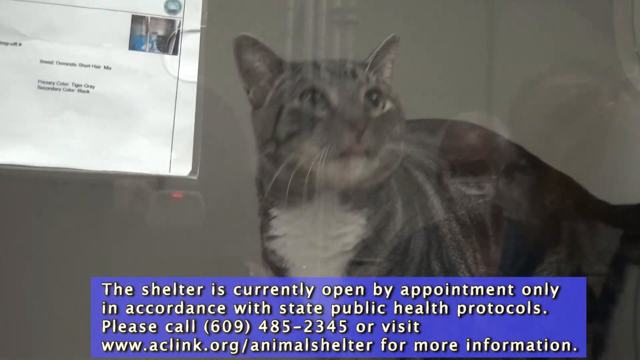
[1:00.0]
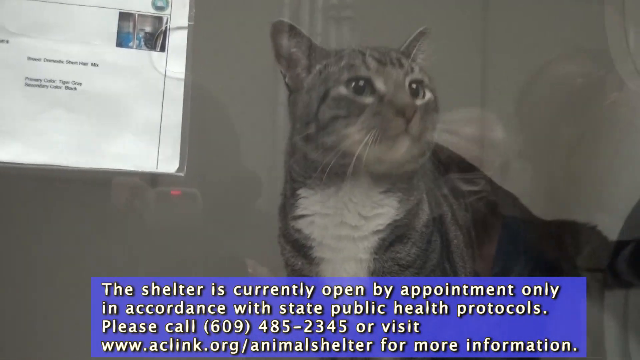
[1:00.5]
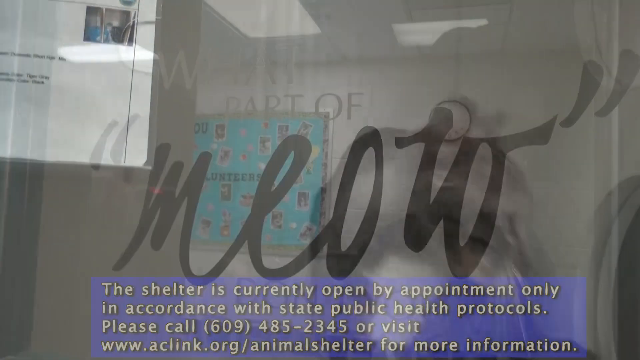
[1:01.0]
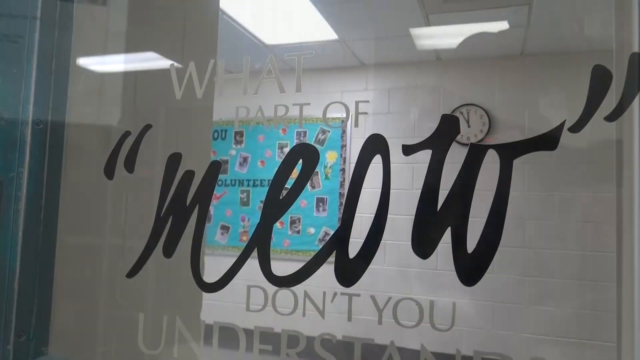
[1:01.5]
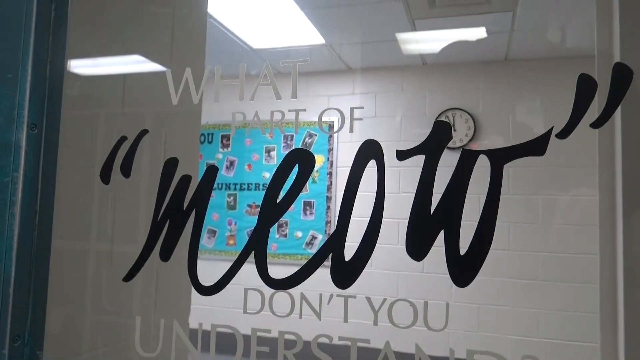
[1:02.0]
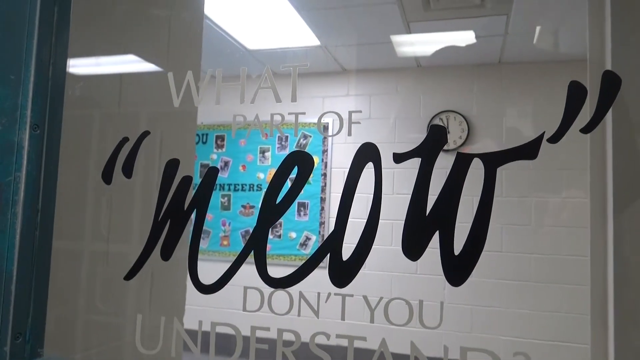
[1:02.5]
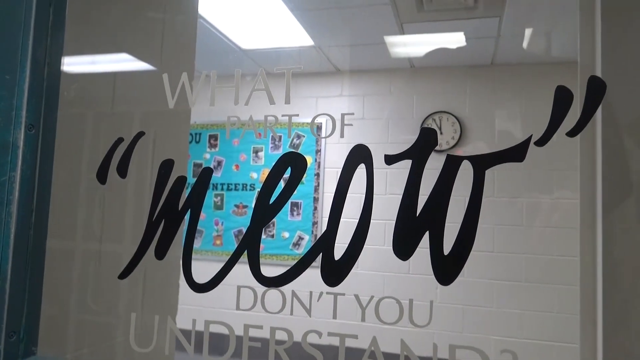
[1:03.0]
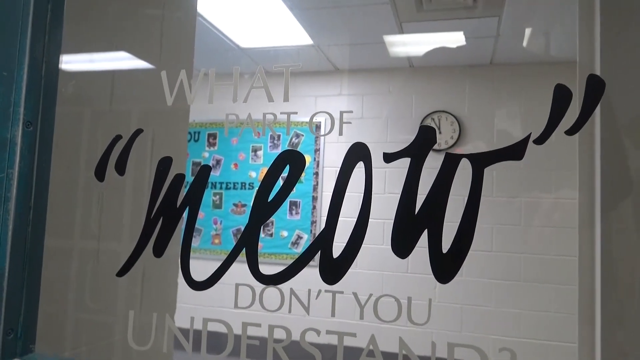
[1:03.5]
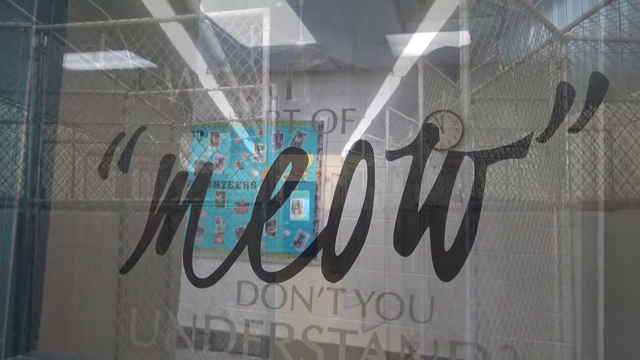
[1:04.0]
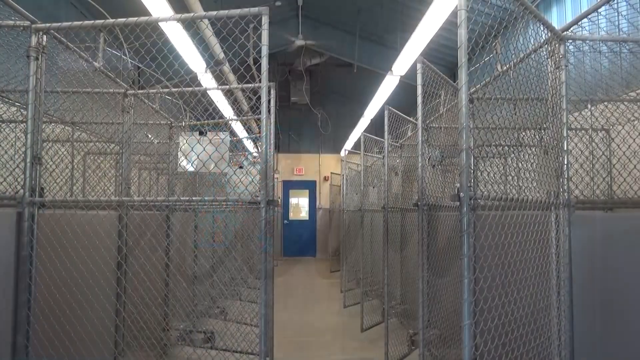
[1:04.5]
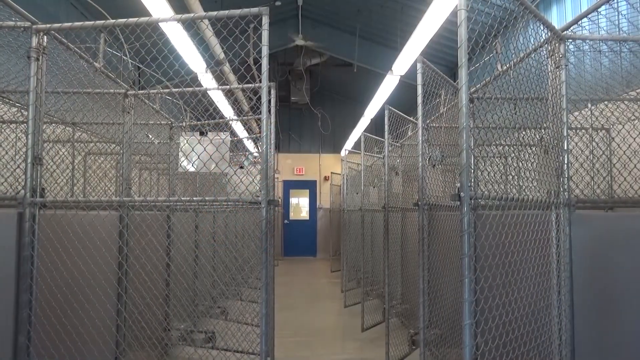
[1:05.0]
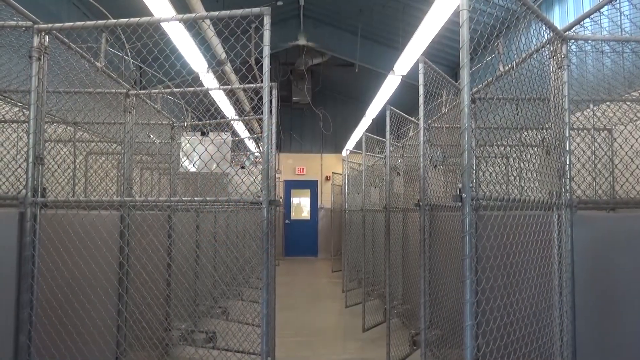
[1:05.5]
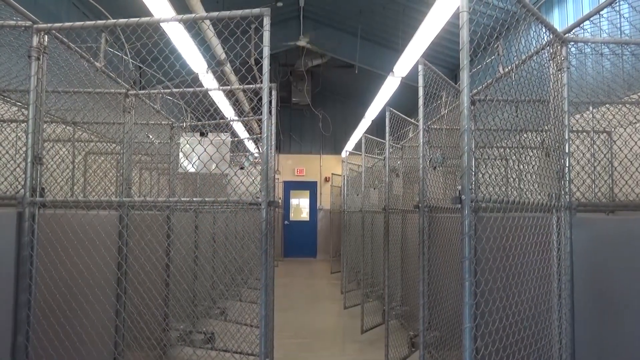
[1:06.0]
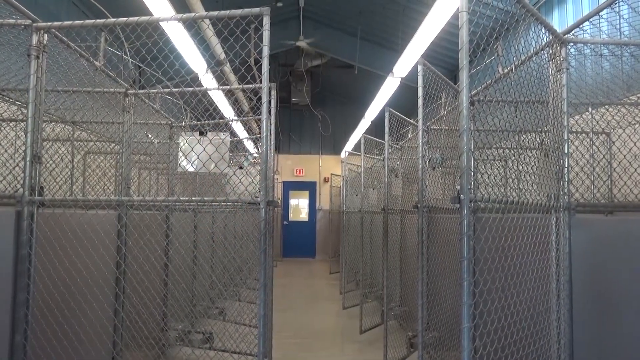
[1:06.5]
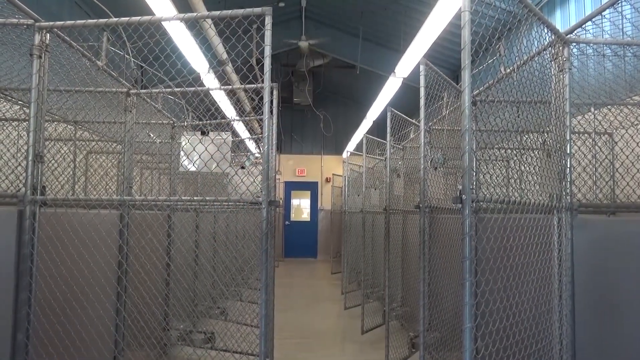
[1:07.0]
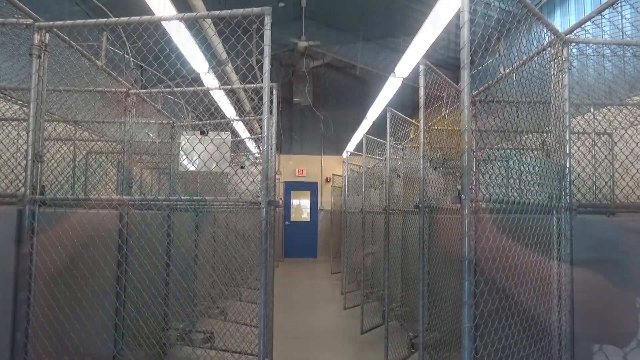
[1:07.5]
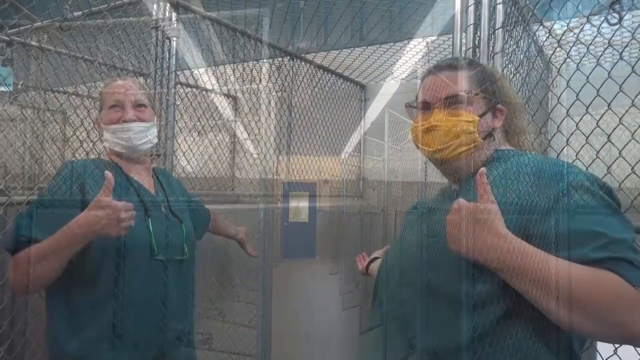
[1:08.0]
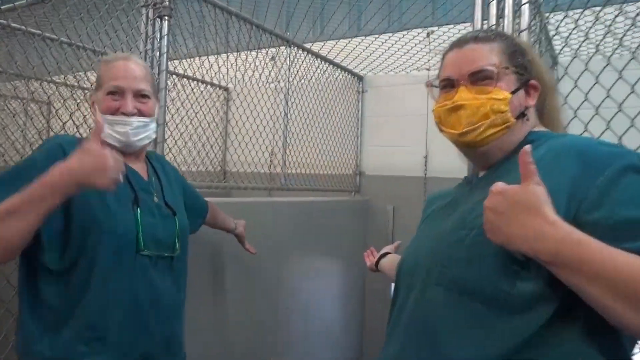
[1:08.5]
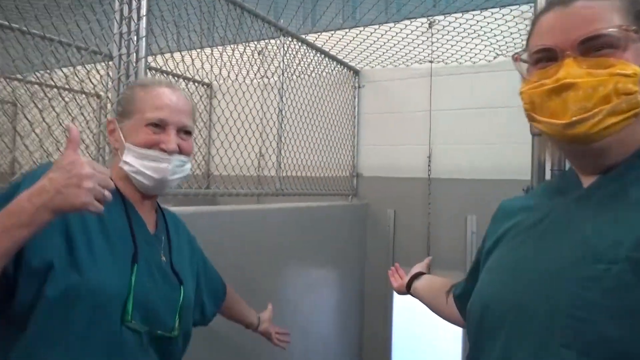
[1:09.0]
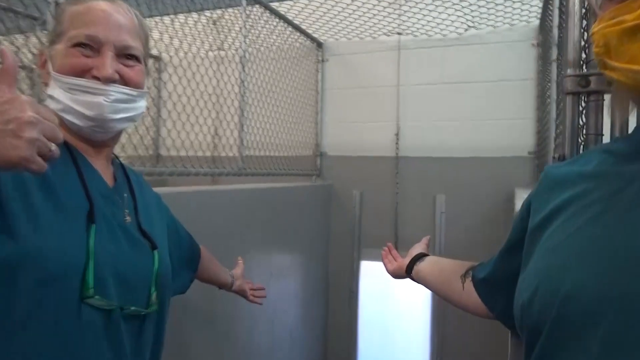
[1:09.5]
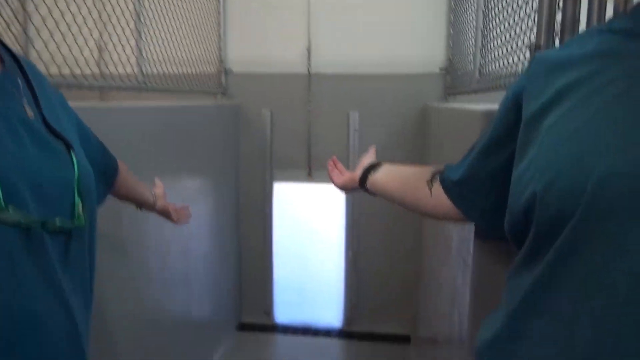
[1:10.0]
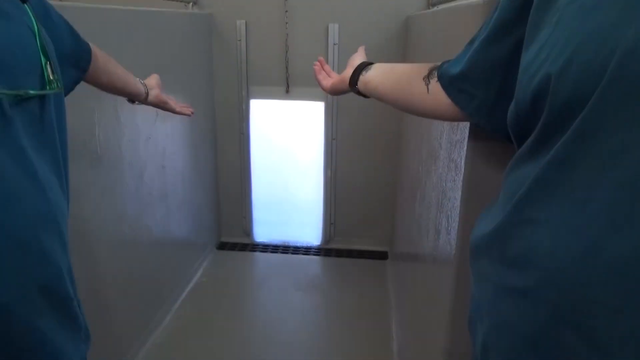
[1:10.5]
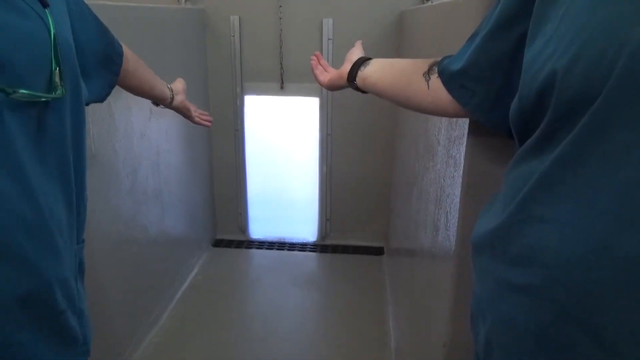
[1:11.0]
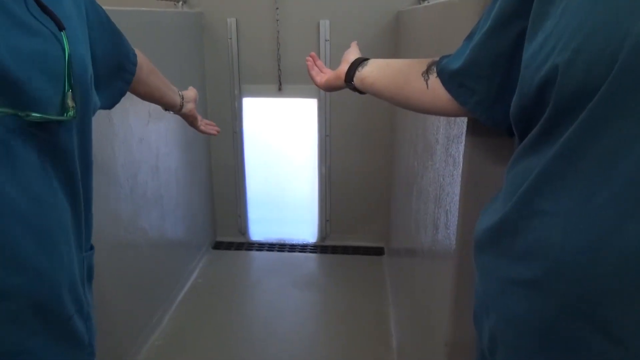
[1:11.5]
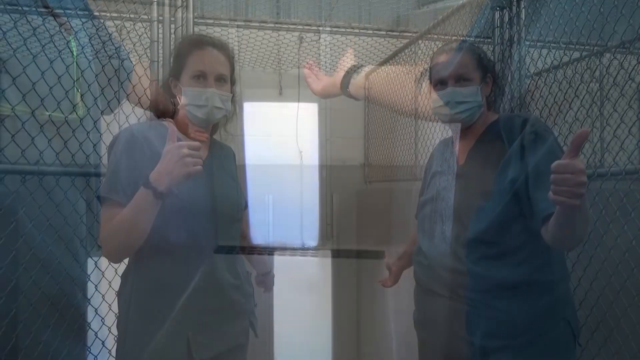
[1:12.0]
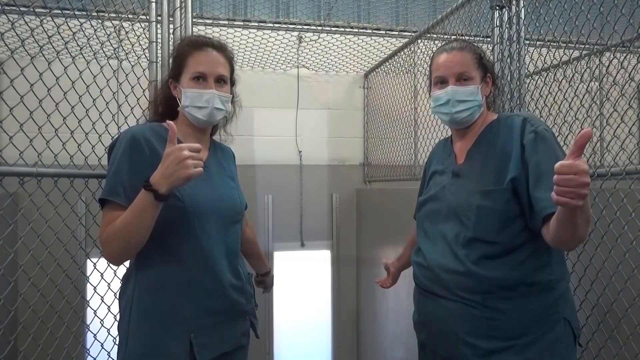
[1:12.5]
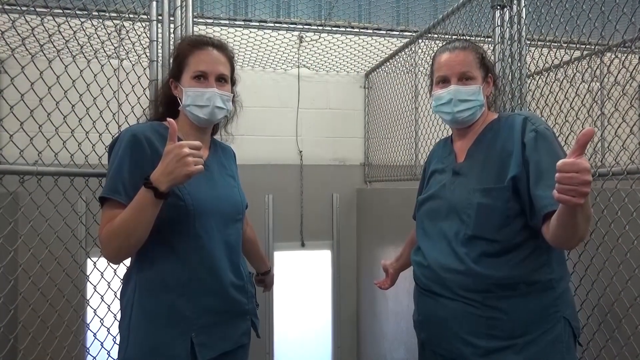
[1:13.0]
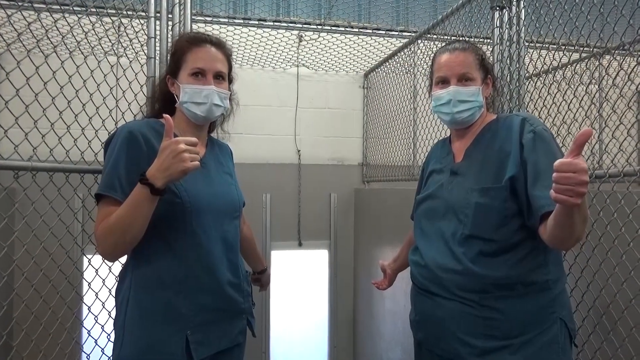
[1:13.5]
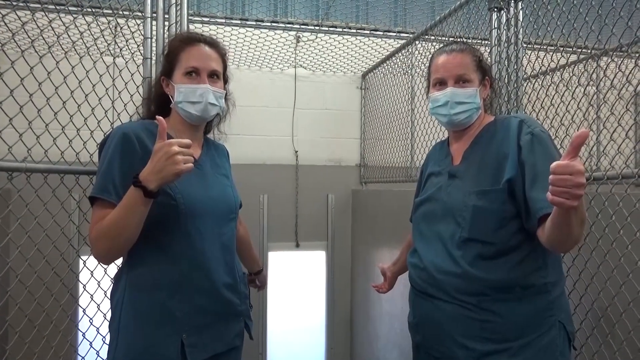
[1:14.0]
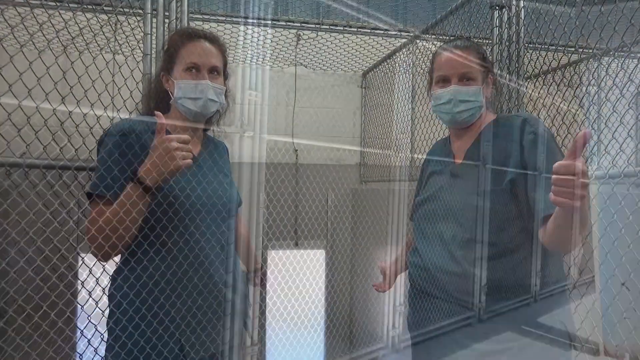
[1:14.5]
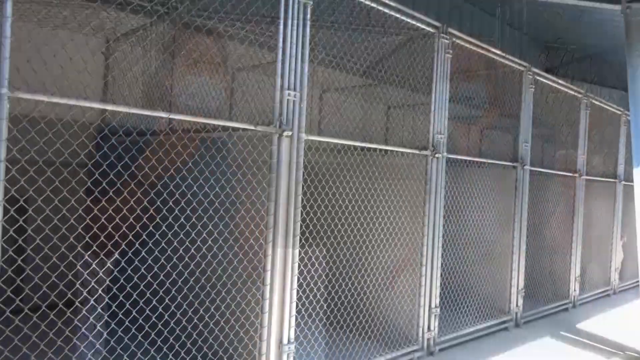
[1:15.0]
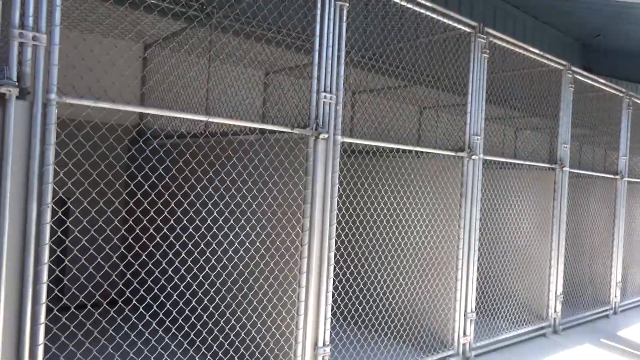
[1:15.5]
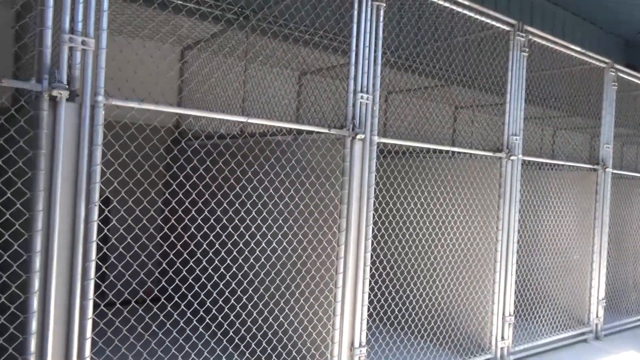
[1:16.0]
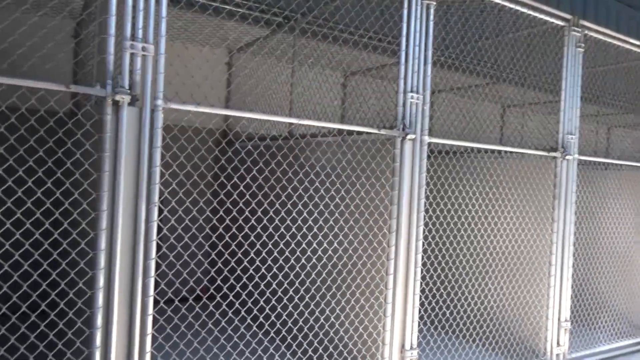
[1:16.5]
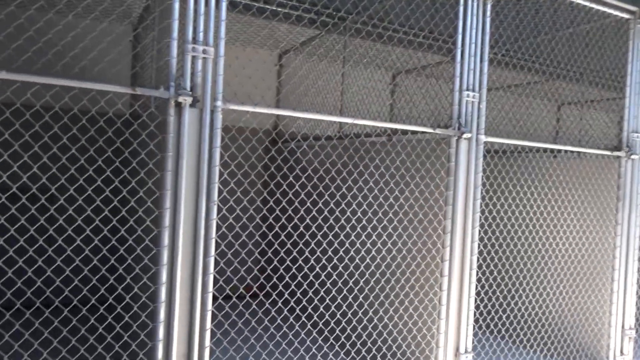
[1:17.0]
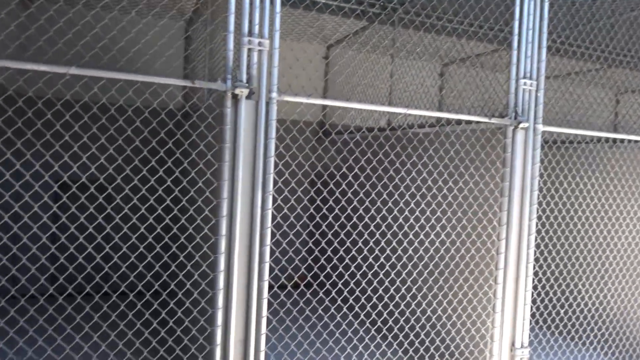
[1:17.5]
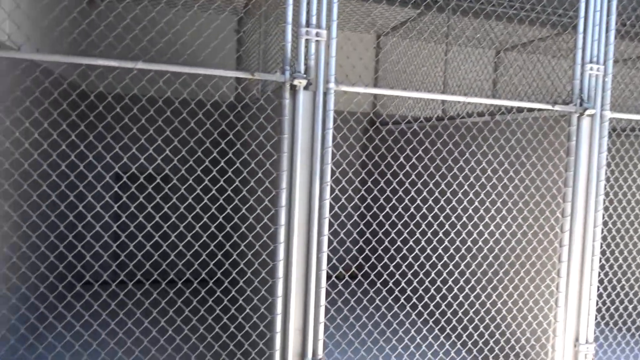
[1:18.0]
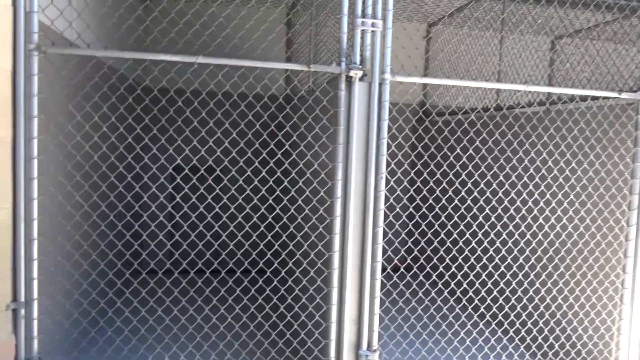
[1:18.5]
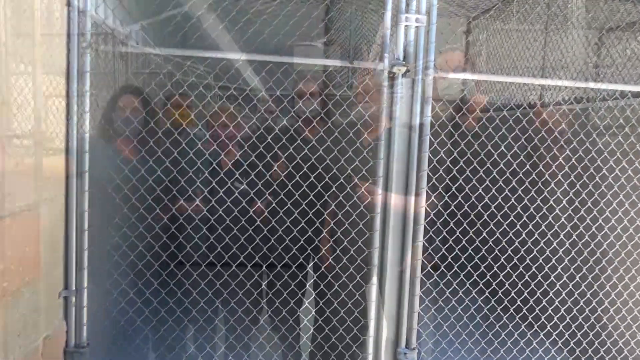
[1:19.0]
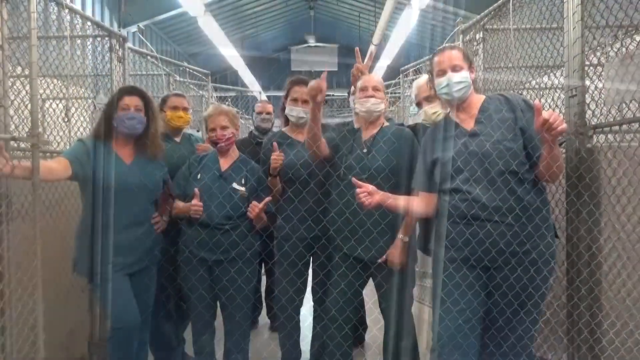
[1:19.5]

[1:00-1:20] The gray and white cat behind glass is still shown. The video transitions to the glass of a door that says "what part of meow don't you understand." Next comes the inside of a shelter kennel with tall chain-link fences that hold the animals in their kennels, and a blue door at the end of the long hallway. Two female shelter staff in teal medical scrubs give thumbs up; the woman on the far right wears a yellow mask, and the other wears a white mask with glasses around her neck. Smiling, they show the way toward a doggy door inside the kennel. Two more female shelter staff show the way to another doggy door with their thumbs up. A panning view shows how empty the animal shelter is, and another transition shows shelter staff giving thumbs up.